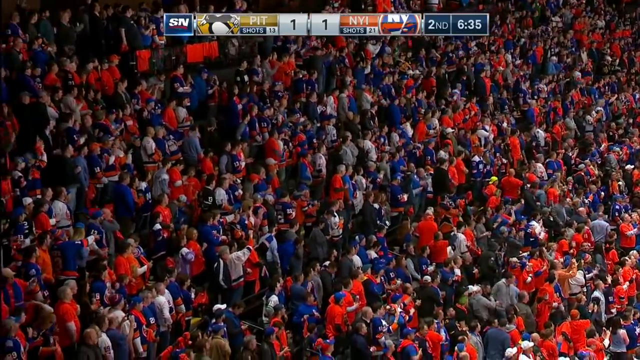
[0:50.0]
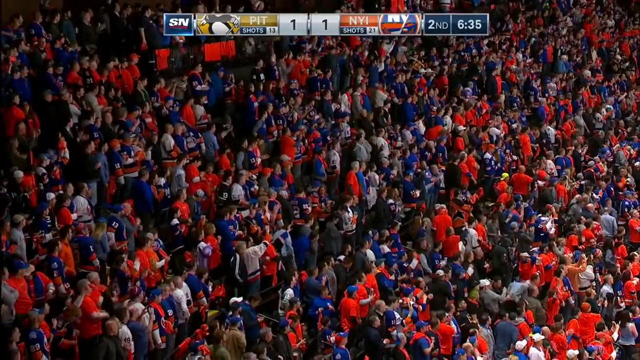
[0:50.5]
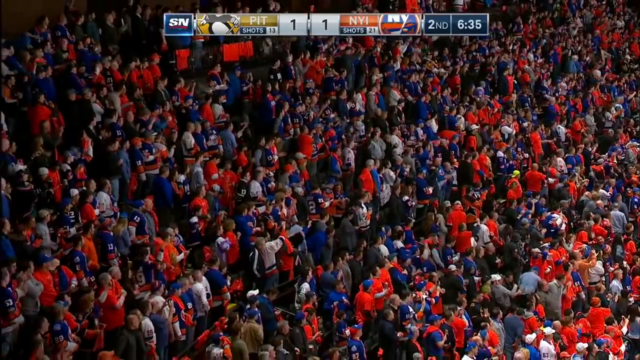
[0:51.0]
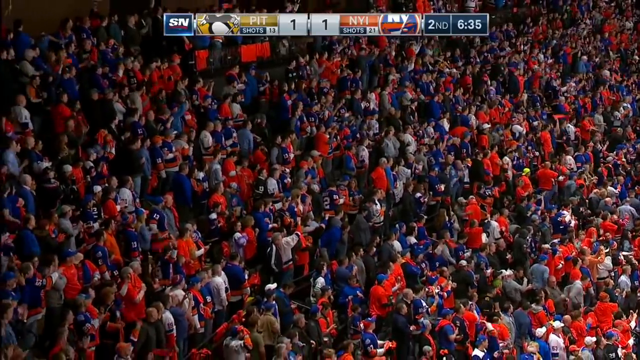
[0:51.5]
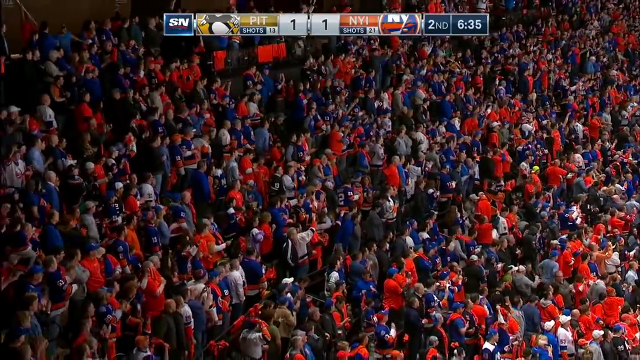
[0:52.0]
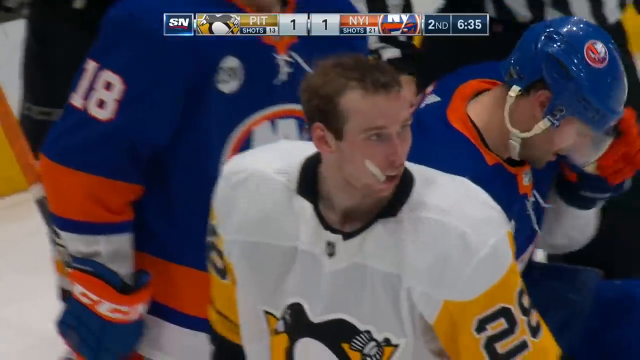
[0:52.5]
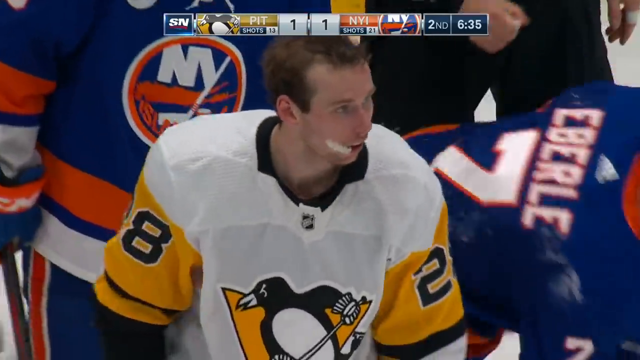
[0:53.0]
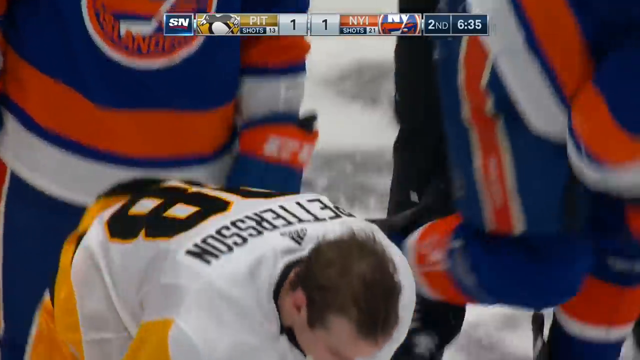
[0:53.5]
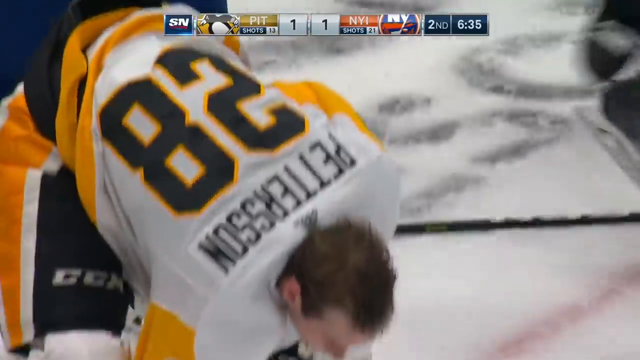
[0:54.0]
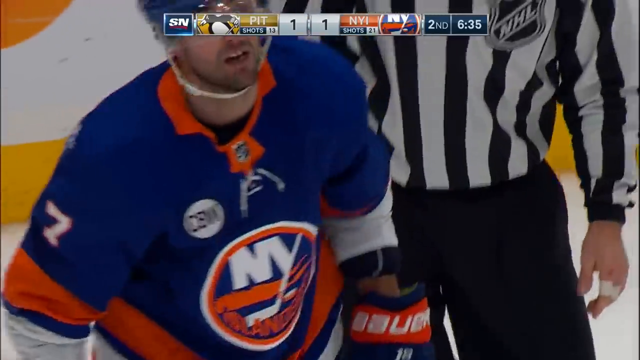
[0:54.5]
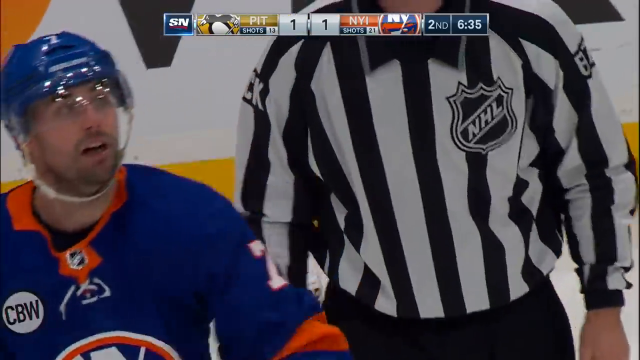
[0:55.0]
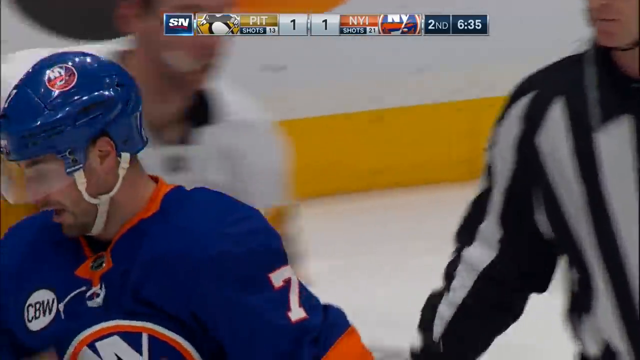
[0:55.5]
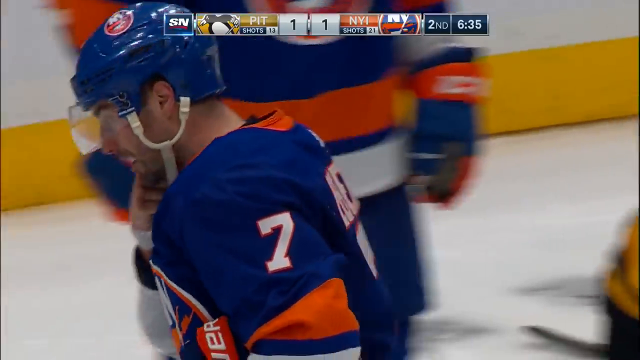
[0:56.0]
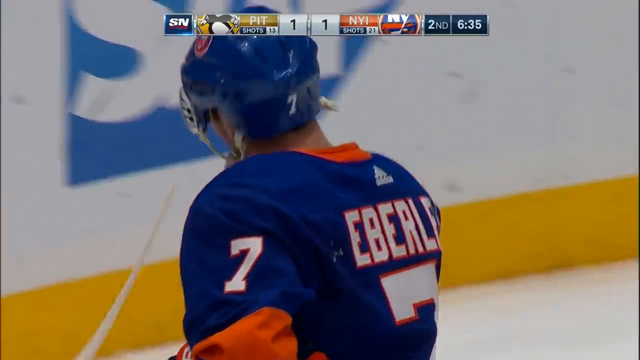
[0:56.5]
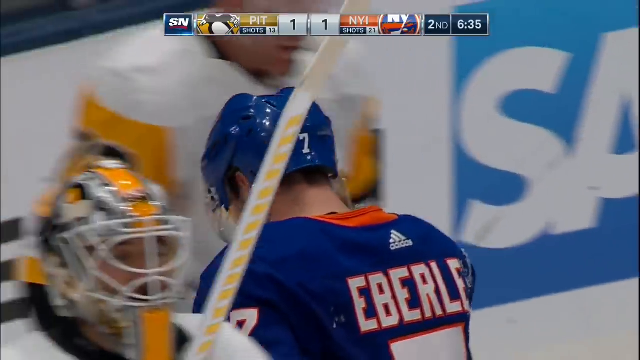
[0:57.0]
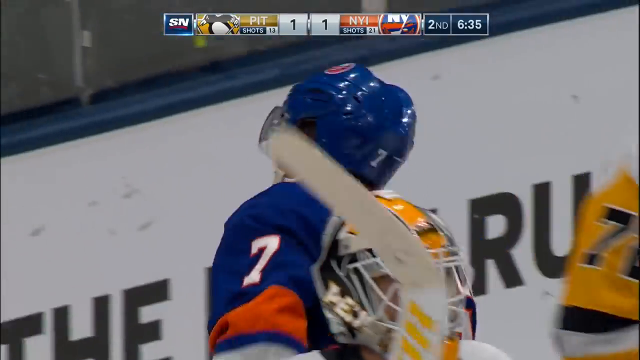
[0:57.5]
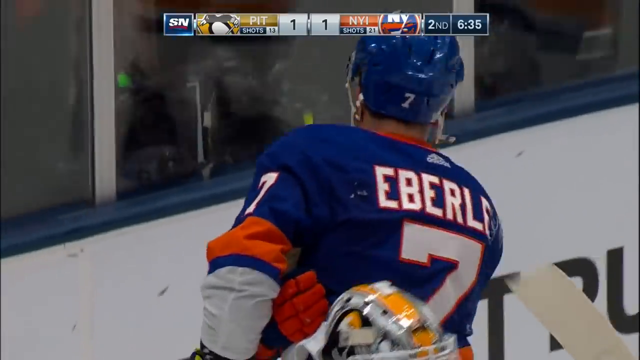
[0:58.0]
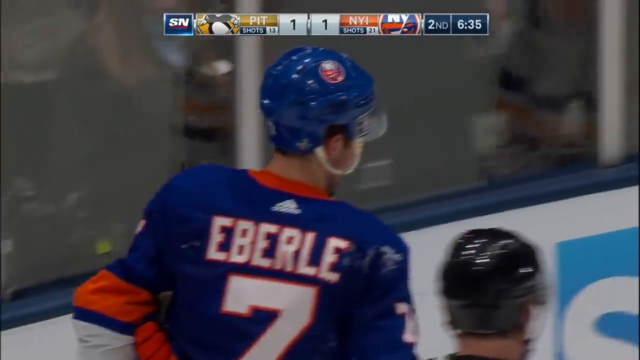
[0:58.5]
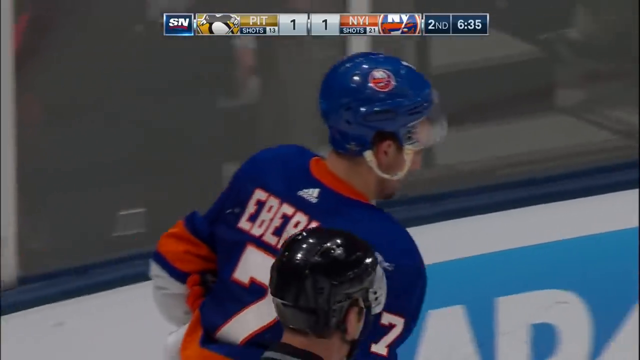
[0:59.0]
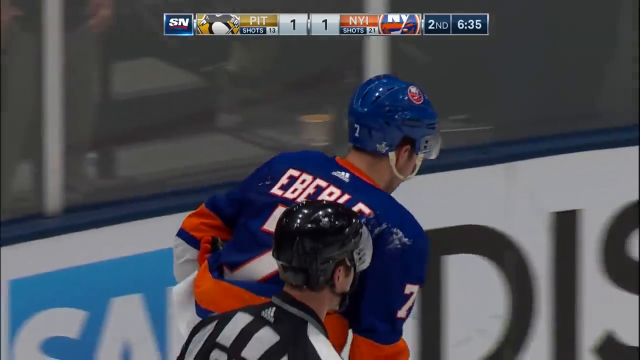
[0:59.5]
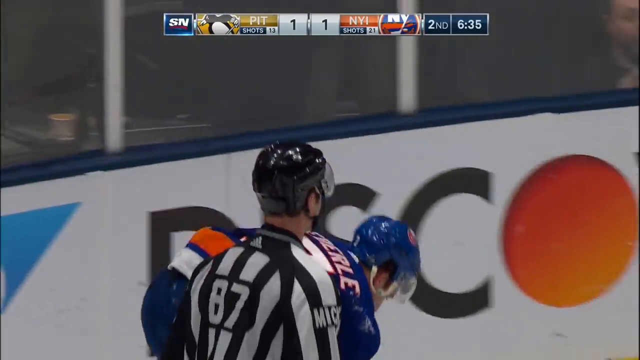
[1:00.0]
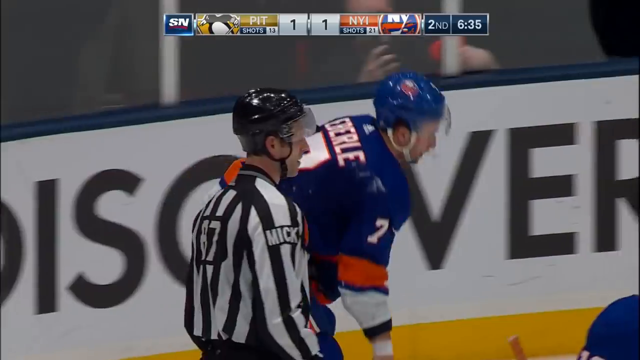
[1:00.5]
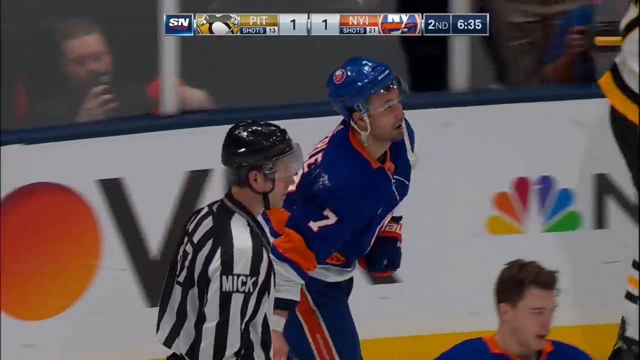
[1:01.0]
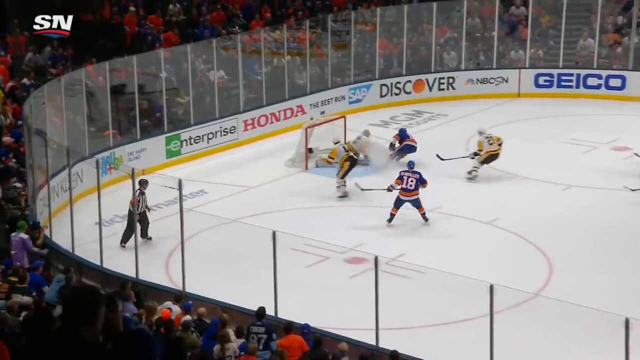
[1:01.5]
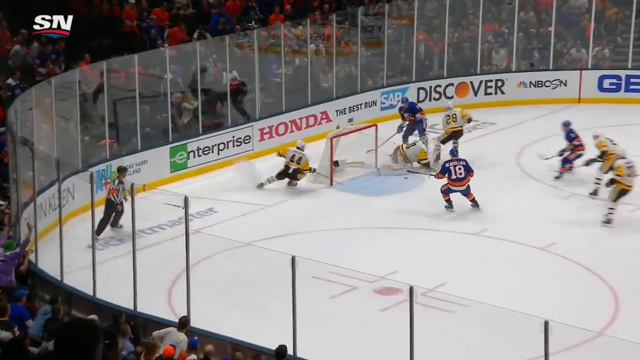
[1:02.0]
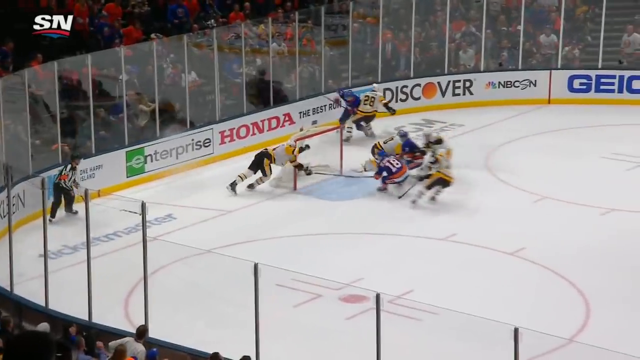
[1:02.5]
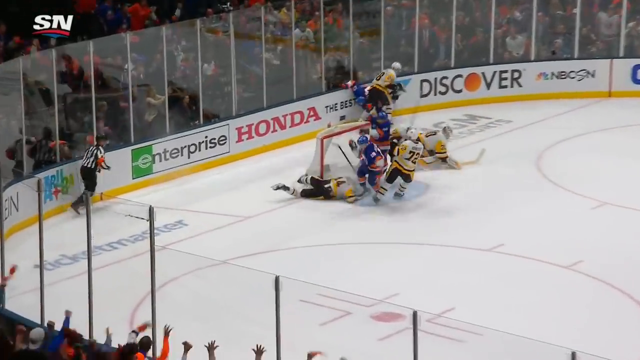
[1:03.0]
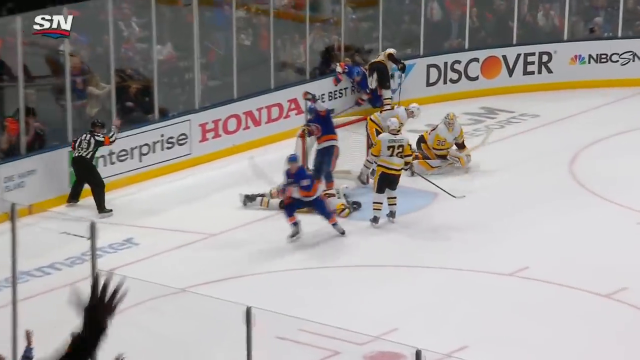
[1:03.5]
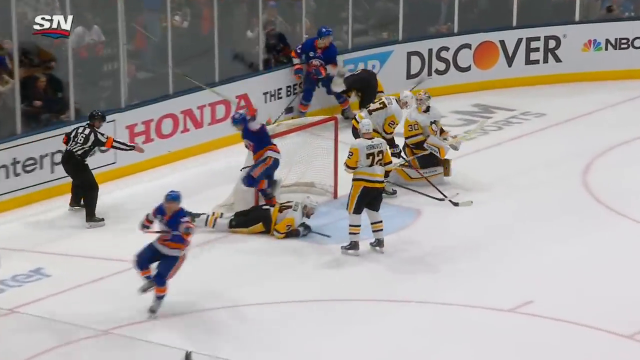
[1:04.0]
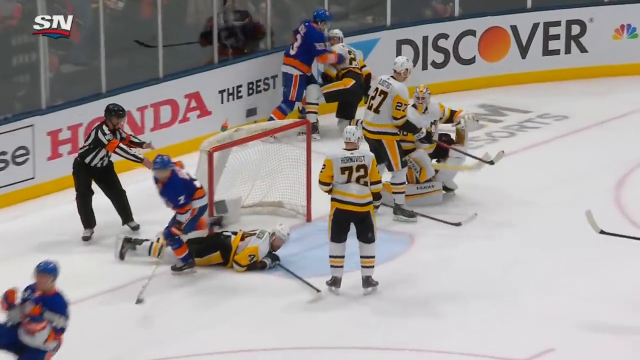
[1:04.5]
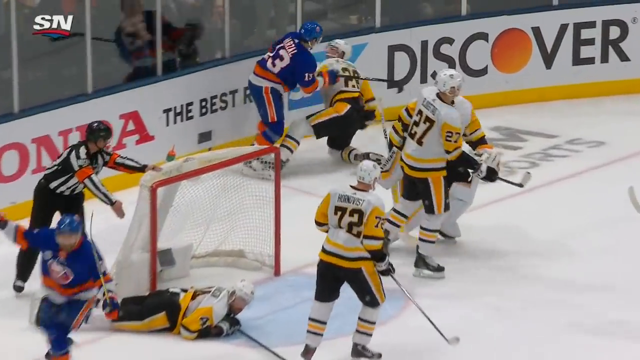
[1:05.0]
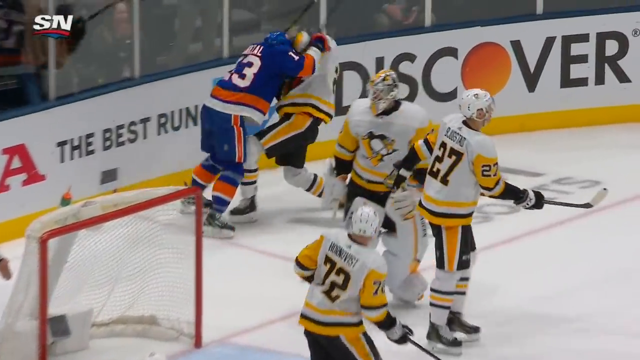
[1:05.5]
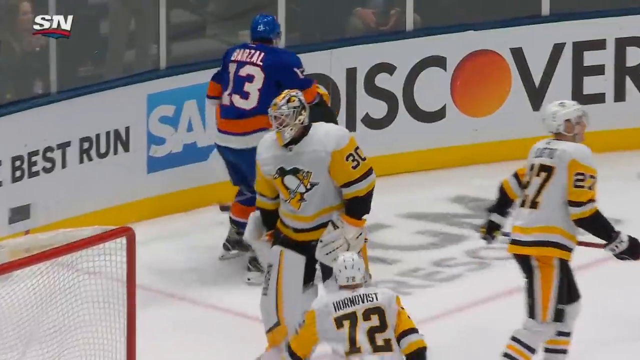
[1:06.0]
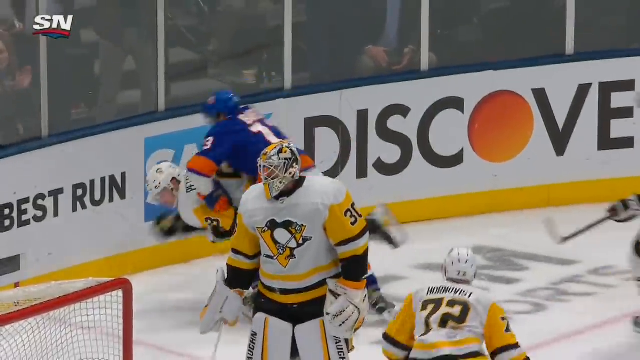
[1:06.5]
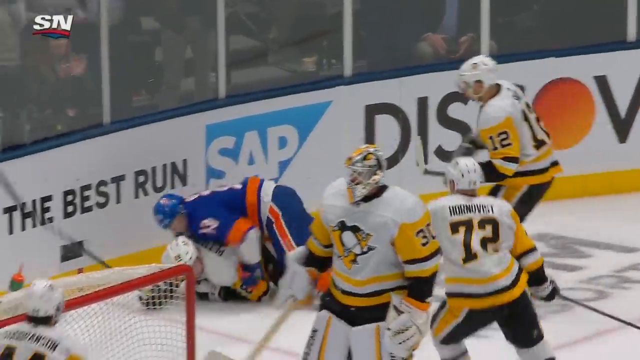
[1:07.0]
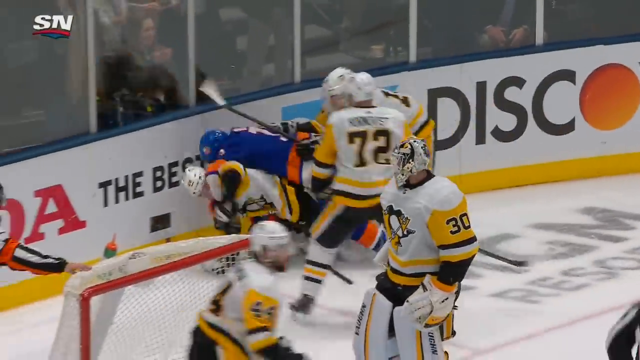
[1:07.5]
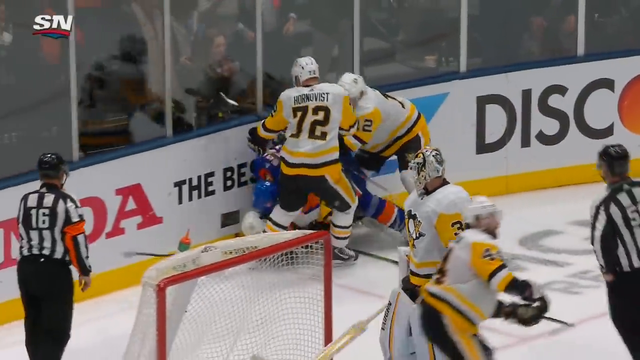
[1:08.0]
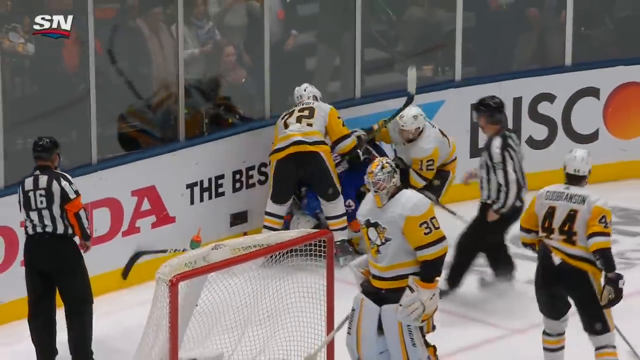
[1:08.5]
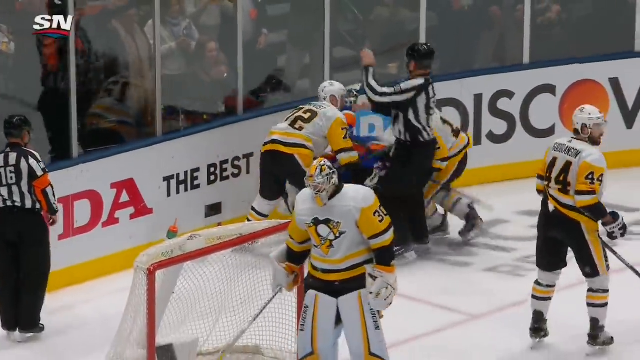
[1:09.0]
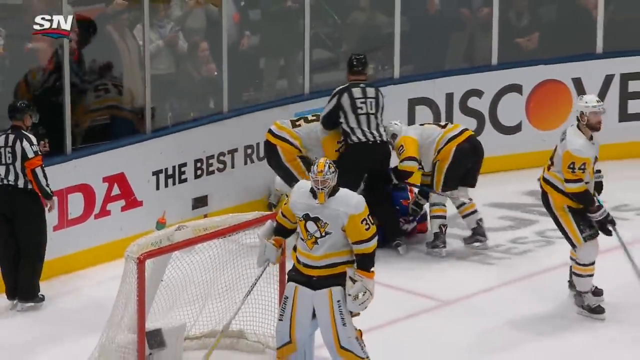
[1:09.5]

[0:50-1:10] The camera pans out across the arena into the stands, where the fans are all on their feet. Many of them wear orange and a few wear blue; they all appear to be Islanders fans, and they cheer on what is happening. Players are getting up and grabbing their helmets. A replay follows: the Islanders score on a fast break, getting the puck into the net, and immediately afterwards two players go to the ground, punching each other. The video cuts back to live action, where the scuffle has ended and the referees are trying to get everyone back to where they were.